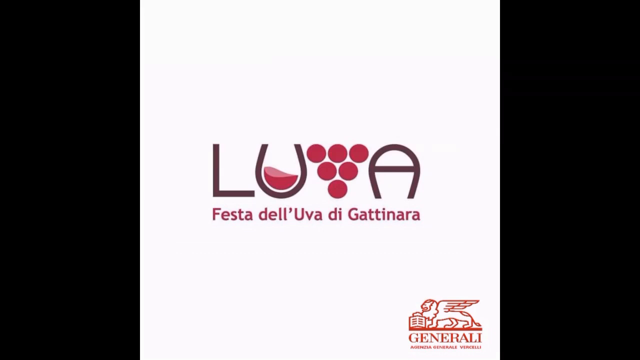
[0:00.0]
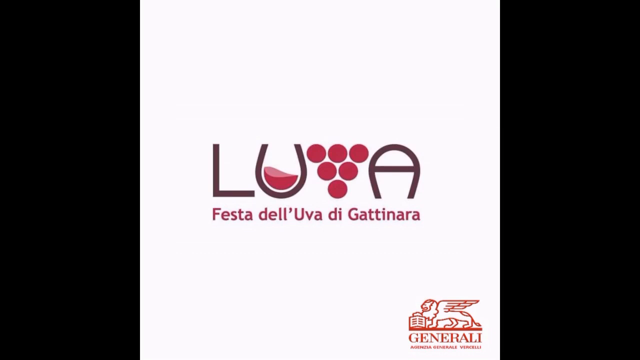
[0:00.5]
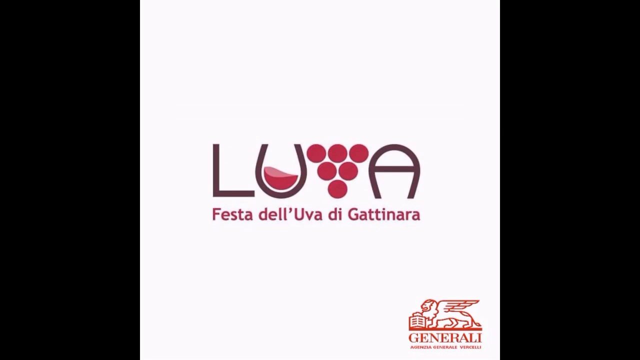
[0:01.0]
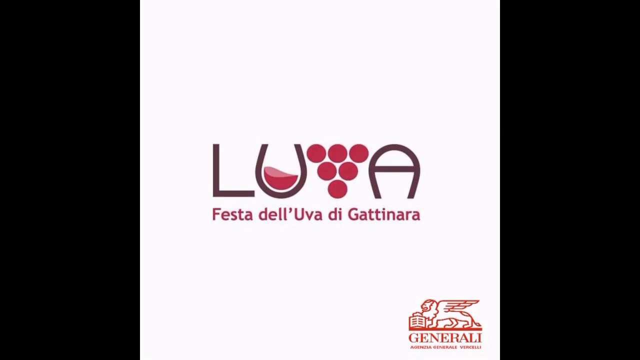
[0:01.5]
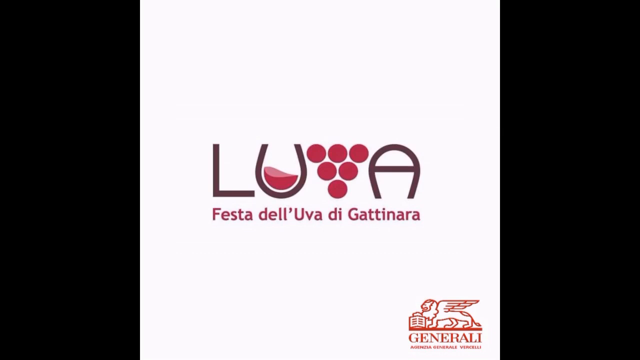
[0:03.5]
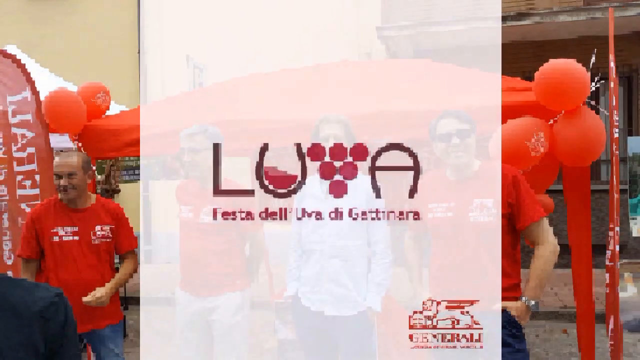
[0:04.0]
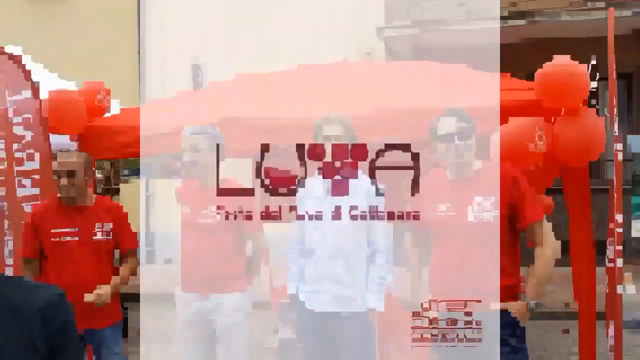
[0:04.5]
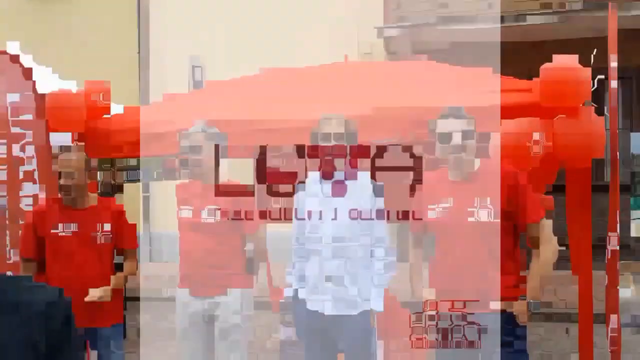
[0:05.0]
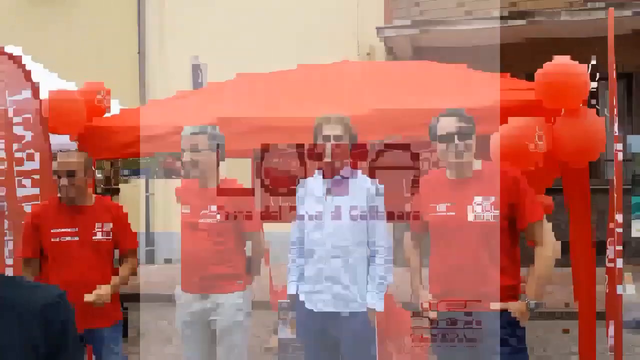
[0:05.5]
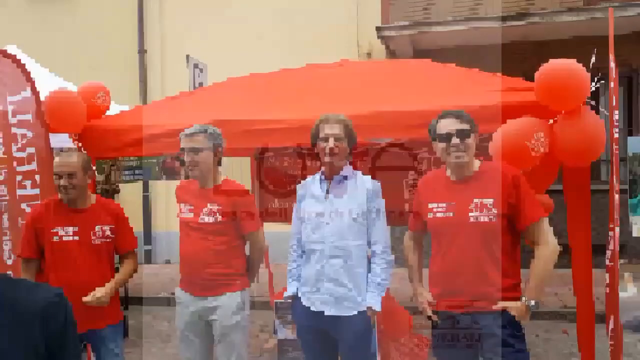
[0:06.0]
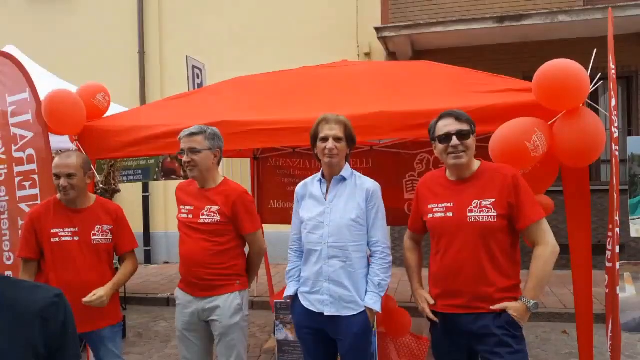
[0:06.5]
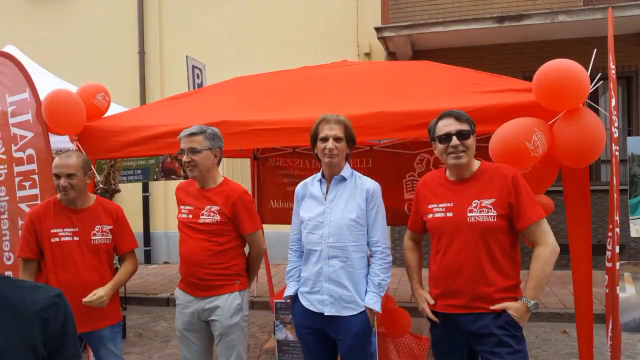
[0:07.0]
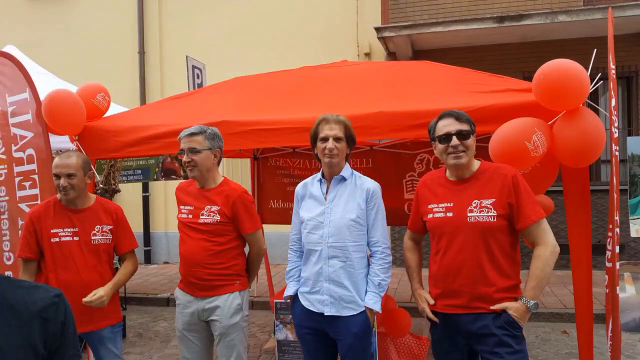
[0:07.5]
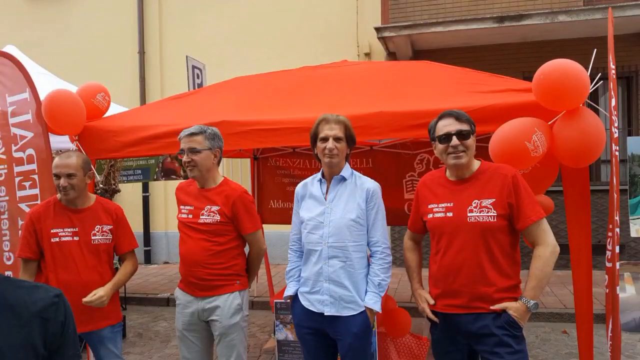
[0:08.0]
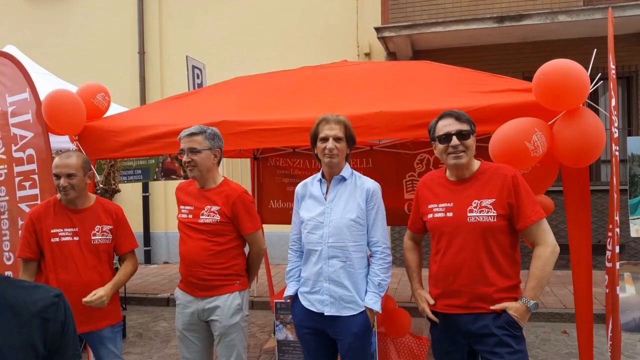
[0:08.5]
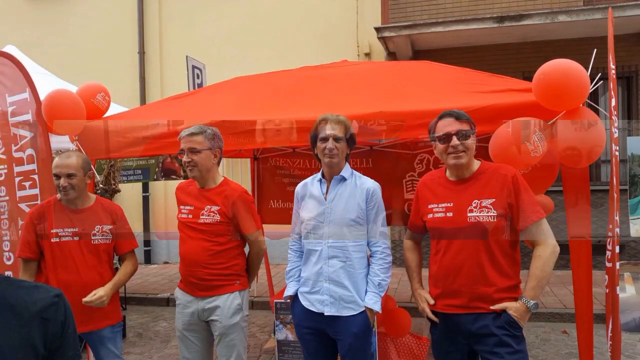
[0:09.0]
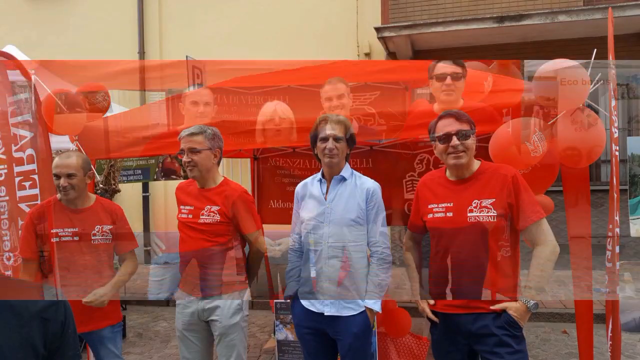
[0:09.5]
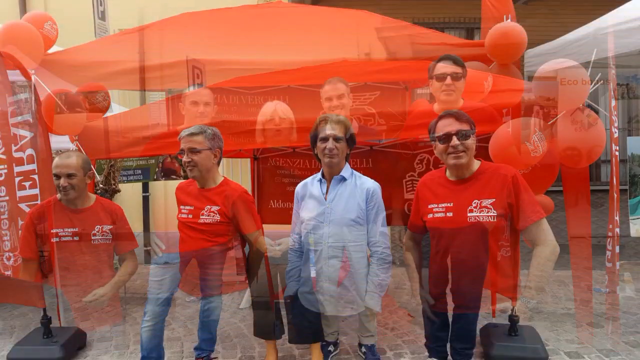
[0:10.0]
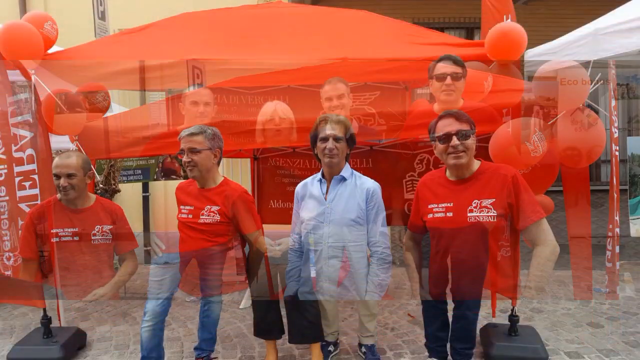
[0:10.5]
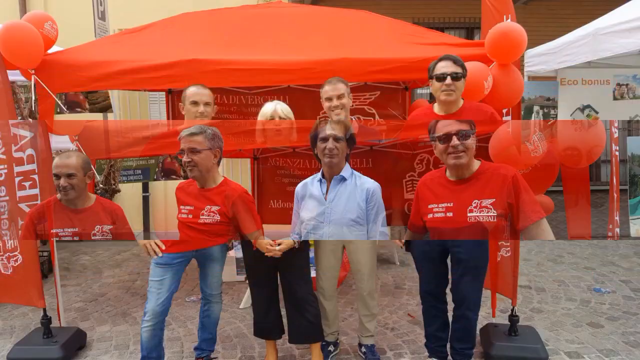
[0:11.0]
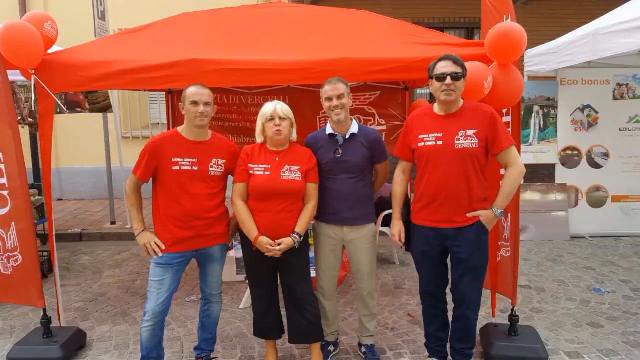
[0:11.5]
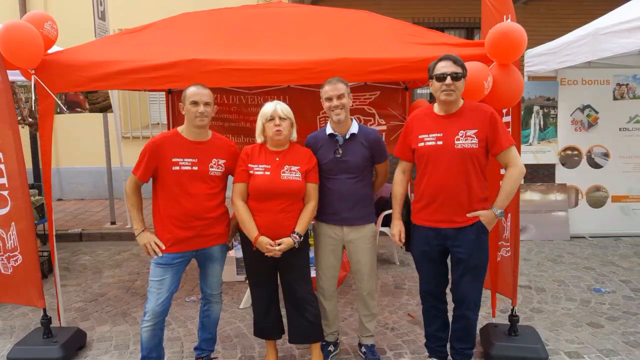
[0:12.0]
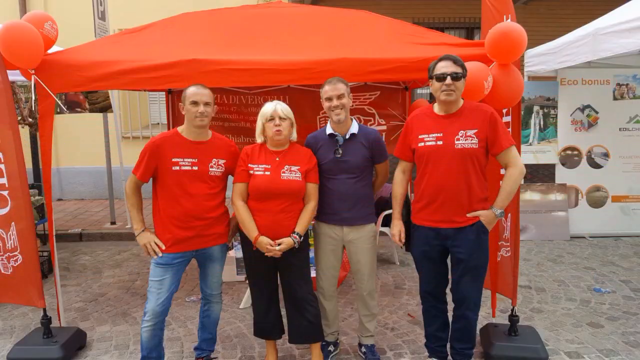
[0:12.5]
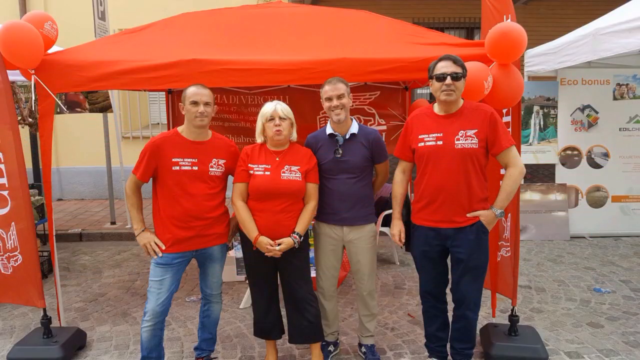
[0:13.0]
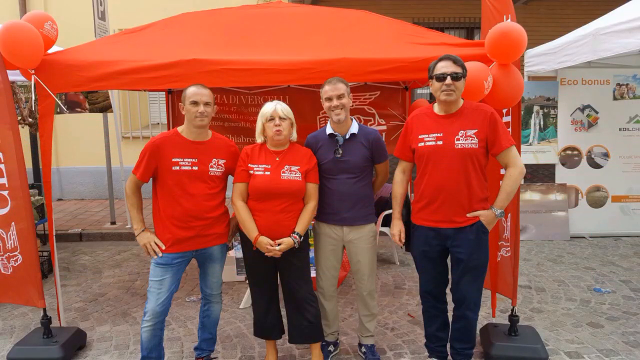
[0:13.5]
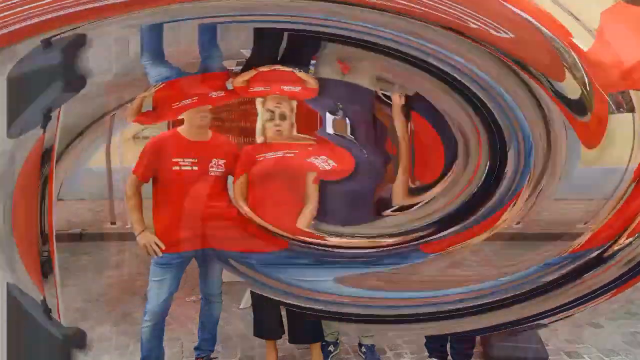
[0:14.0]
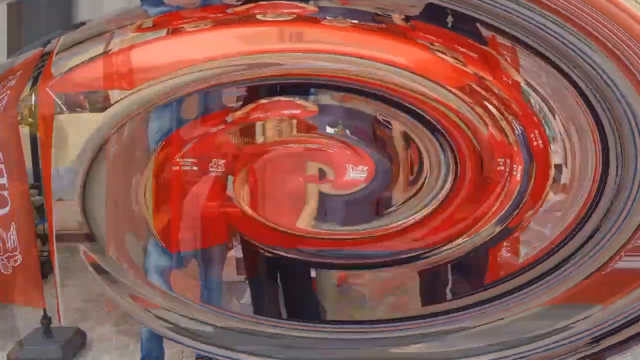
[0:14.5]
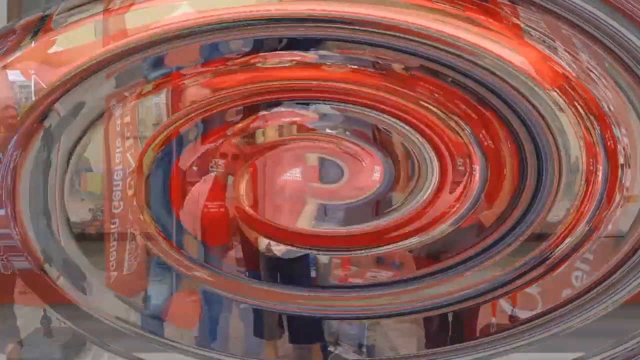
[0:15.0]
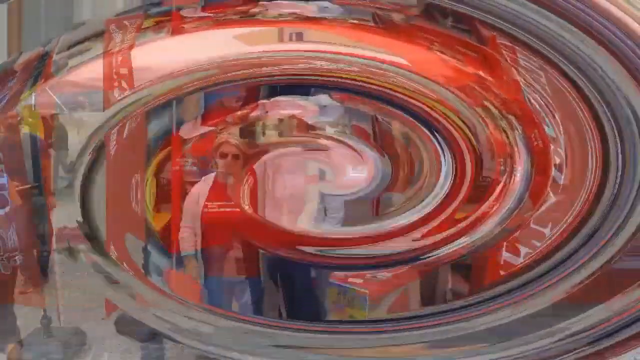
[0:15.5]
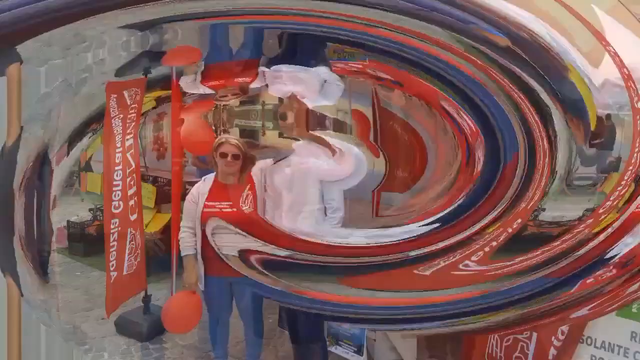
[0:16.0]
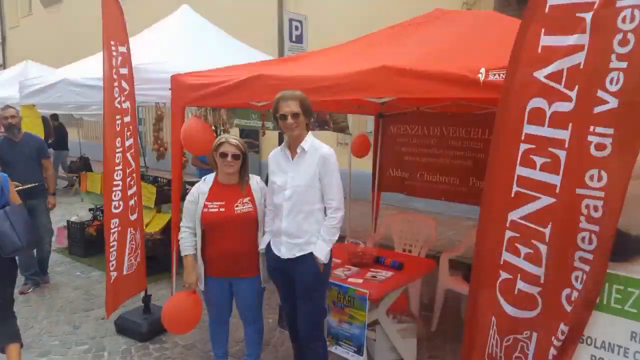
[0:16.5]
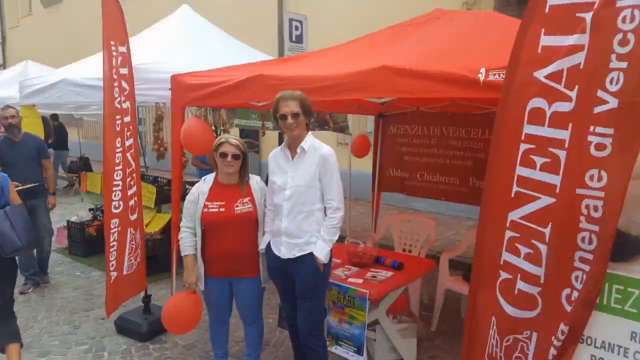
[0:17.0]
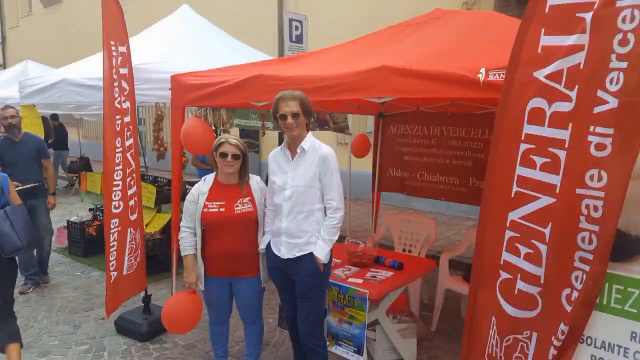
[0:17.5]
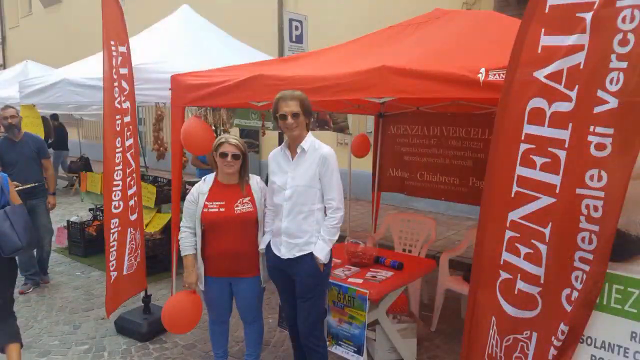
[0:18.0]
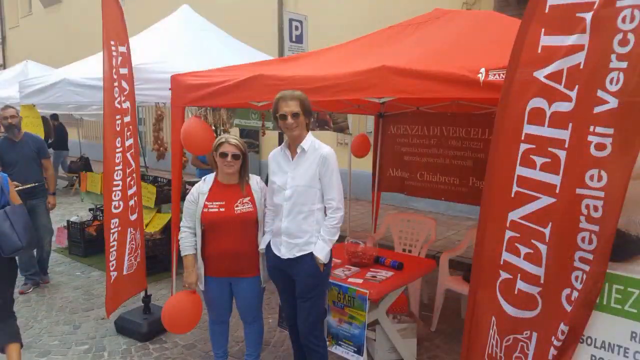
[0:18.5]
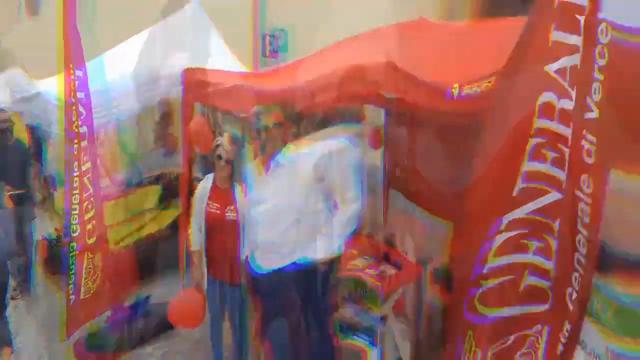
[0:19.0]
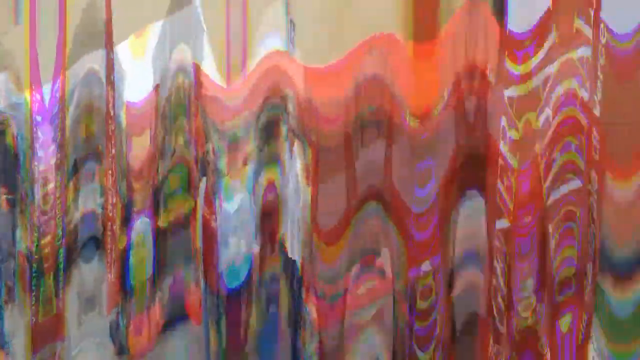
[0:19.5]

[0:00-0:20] The video opens as a presentation from what could be called the Luba Festival. Judging by the logo, it is apparently some sort of wine festival: the U in Luba appears to be a wine glass with wine in it, and the V appears to be a bunch of grapes, suggesting it is related to wine in some fashion. From the logo, the video moves to a very pixelated image of four men standing in front of a simple canopy, like one seen at a networking event or farmers market. The presentation continues with weird transition effects, such as a whirlpool and a star wipe, moving between various images of the people working the booth. The first image has four men; the second has three men and a woman. Most of the people in these images wear a red shirt that represents the company.